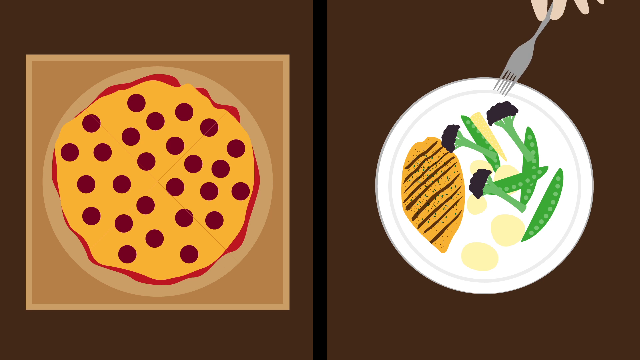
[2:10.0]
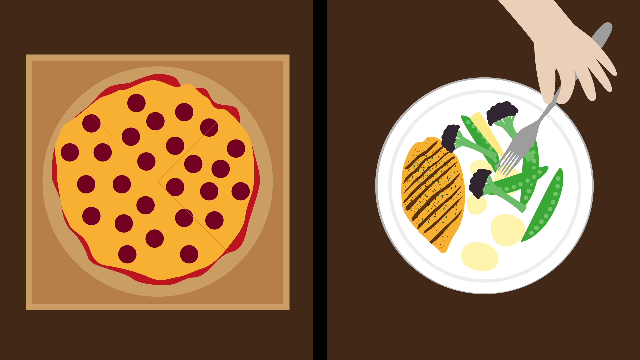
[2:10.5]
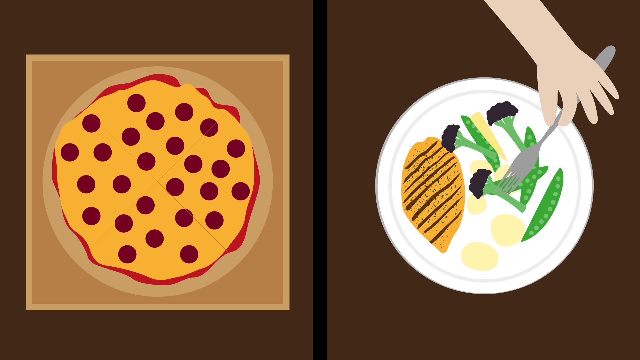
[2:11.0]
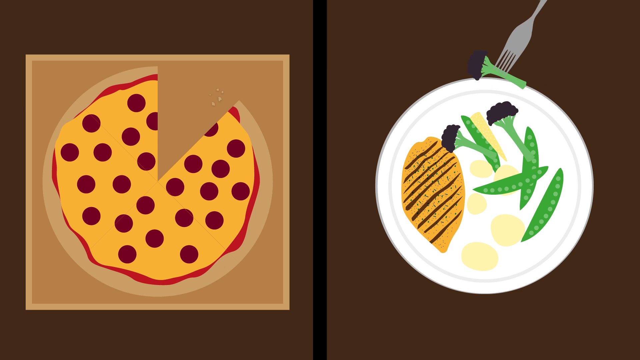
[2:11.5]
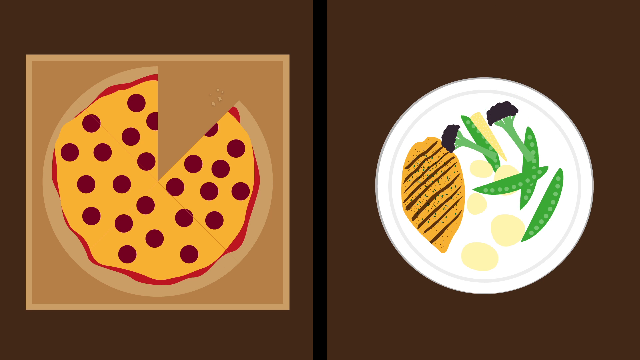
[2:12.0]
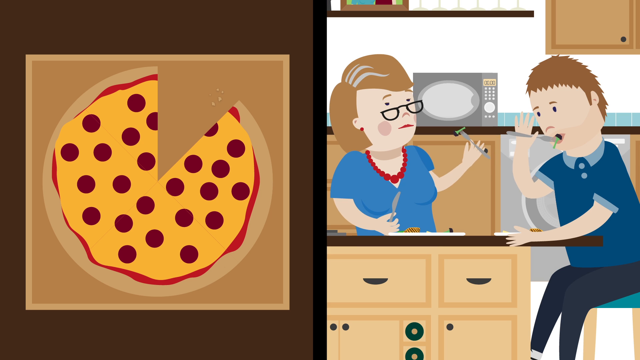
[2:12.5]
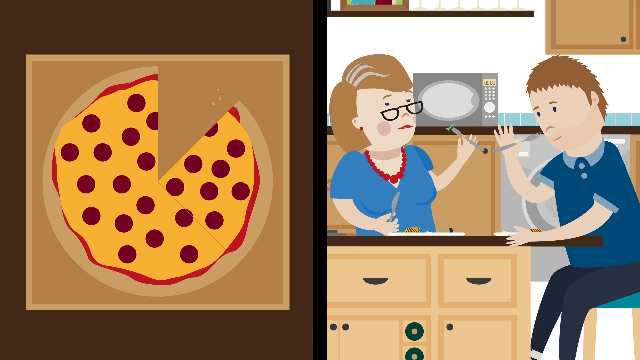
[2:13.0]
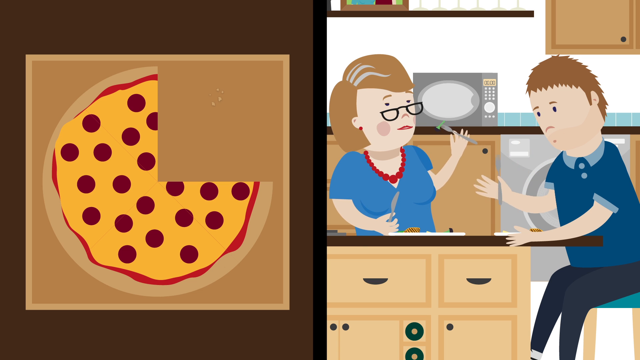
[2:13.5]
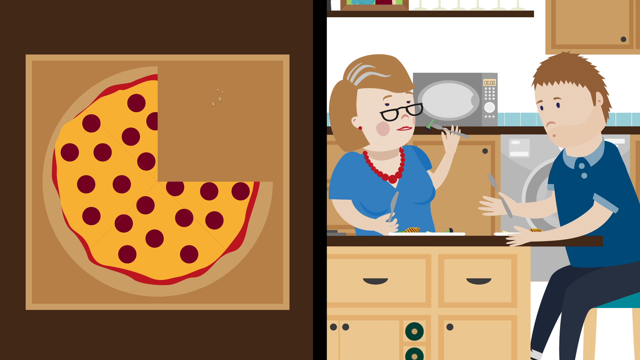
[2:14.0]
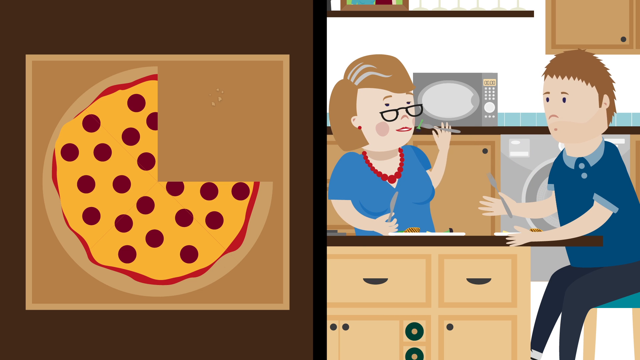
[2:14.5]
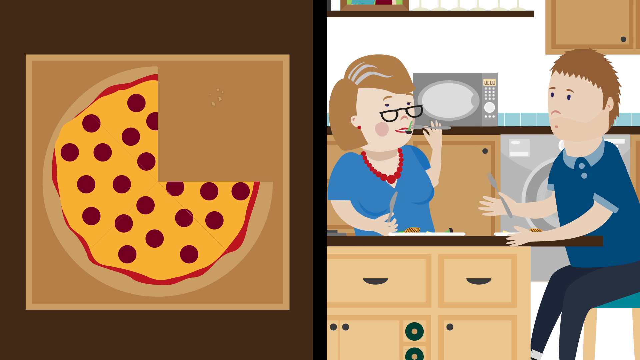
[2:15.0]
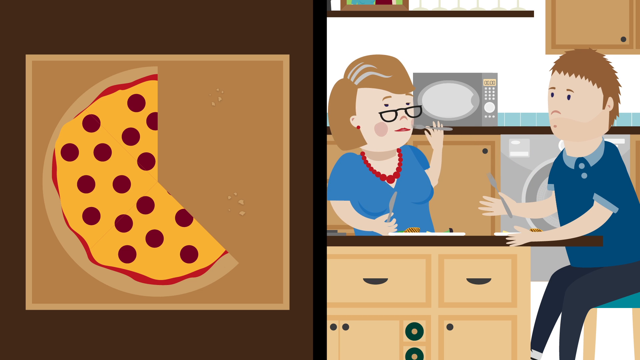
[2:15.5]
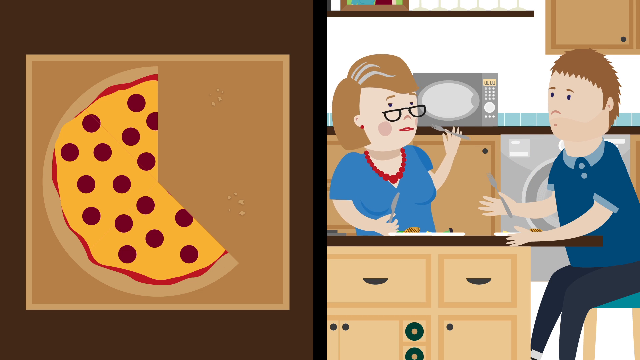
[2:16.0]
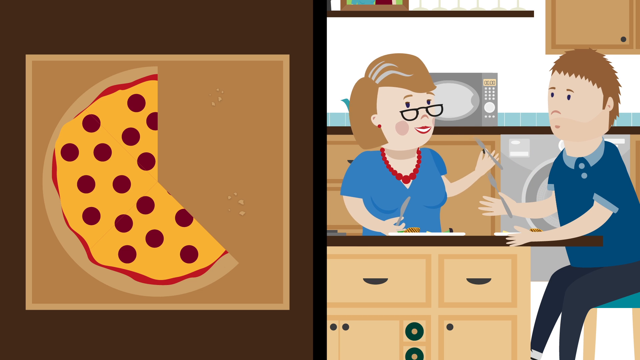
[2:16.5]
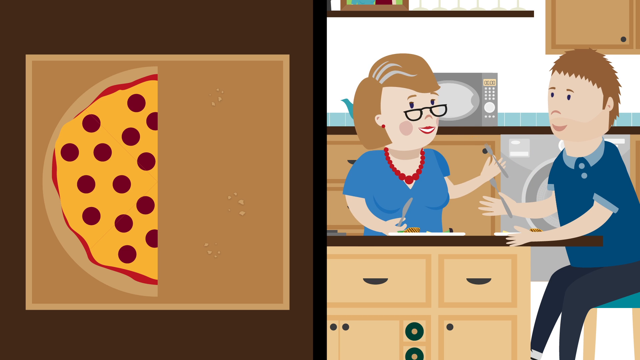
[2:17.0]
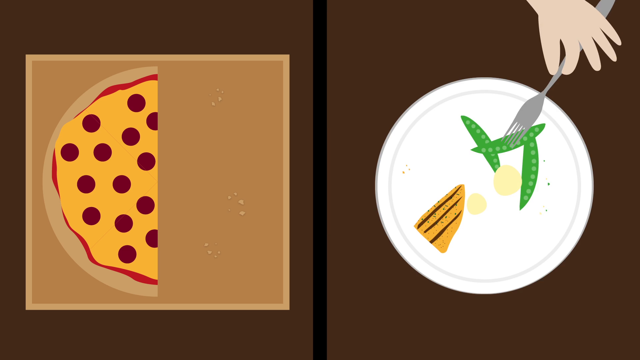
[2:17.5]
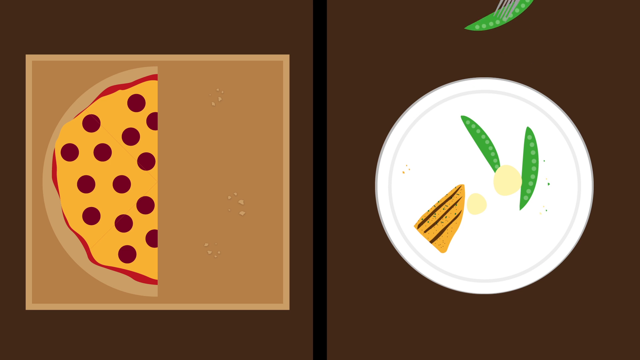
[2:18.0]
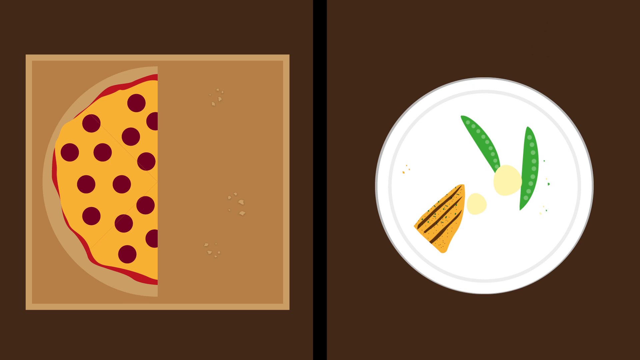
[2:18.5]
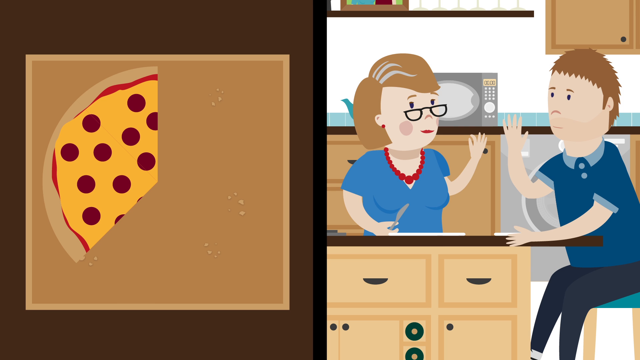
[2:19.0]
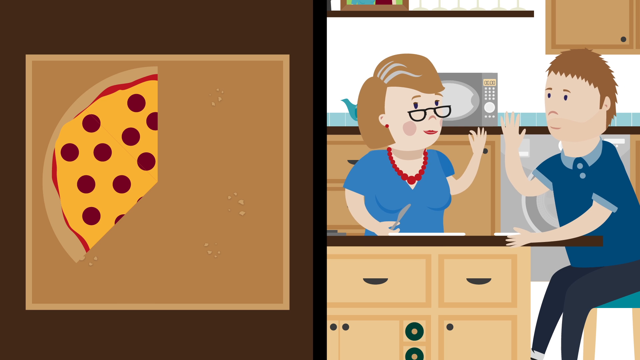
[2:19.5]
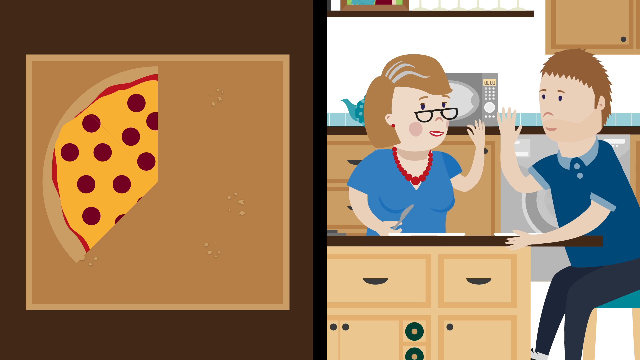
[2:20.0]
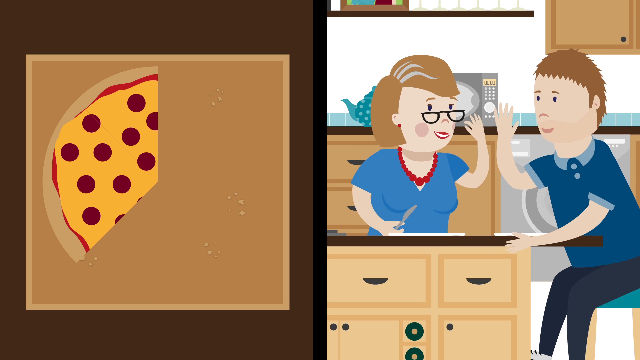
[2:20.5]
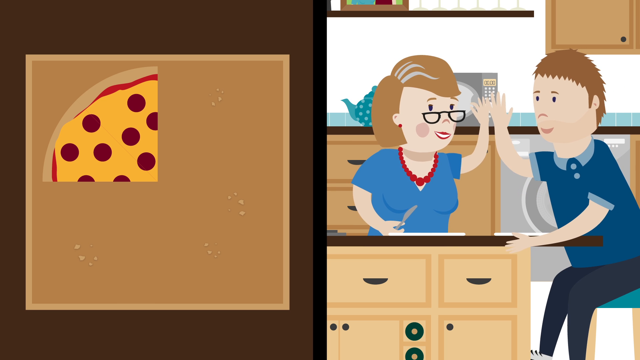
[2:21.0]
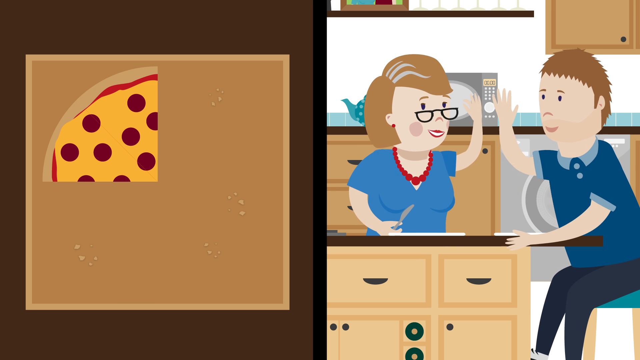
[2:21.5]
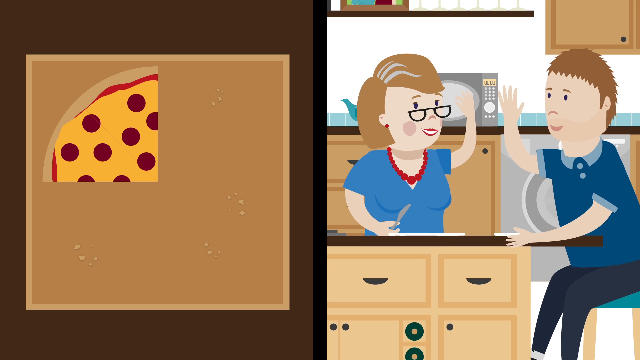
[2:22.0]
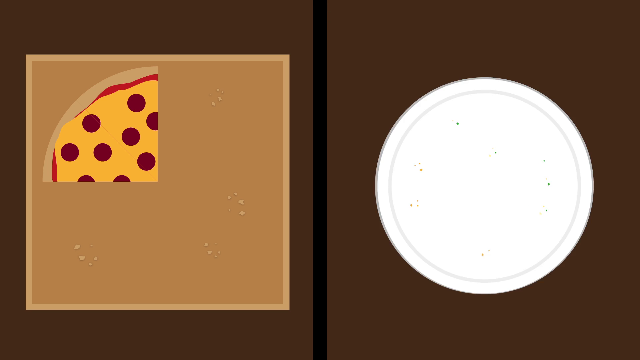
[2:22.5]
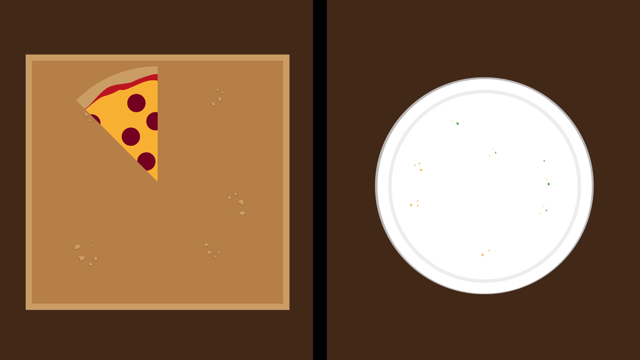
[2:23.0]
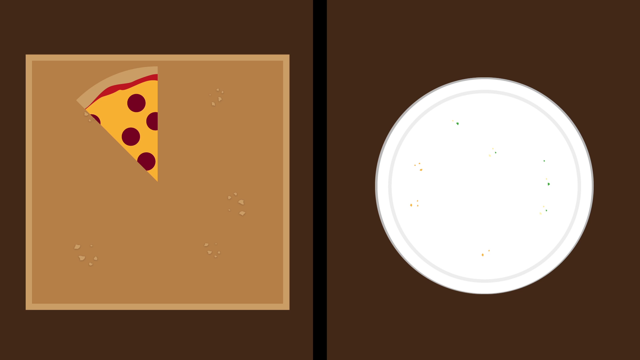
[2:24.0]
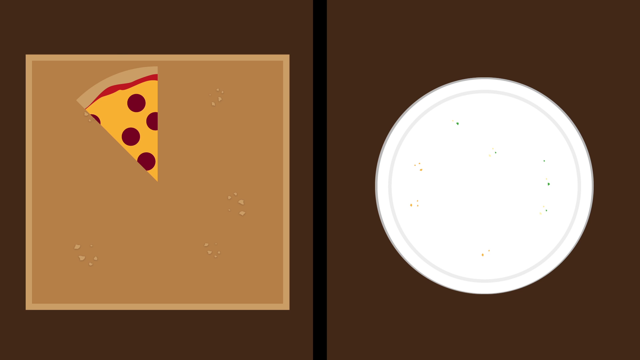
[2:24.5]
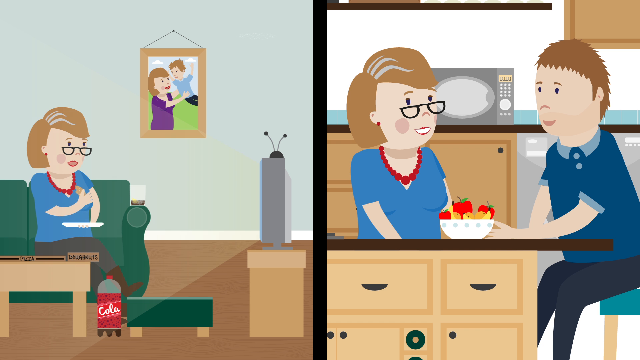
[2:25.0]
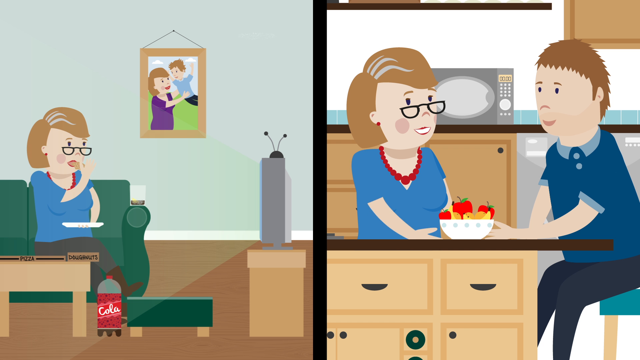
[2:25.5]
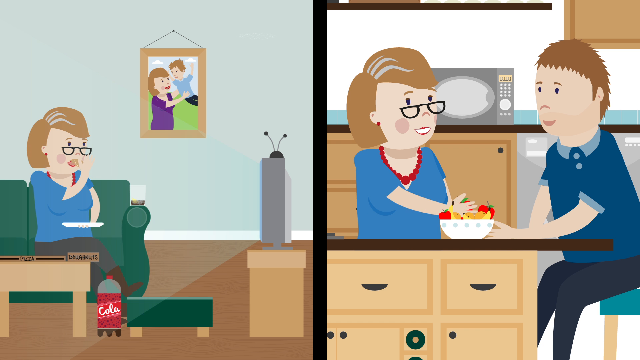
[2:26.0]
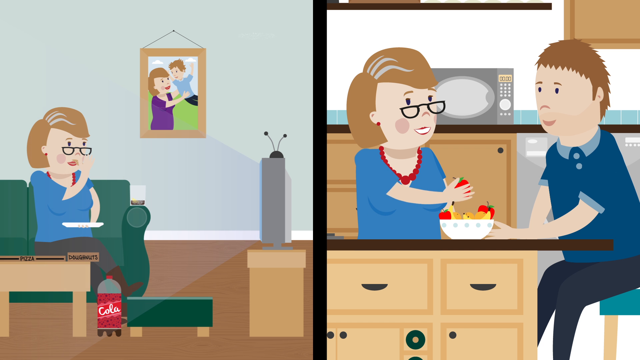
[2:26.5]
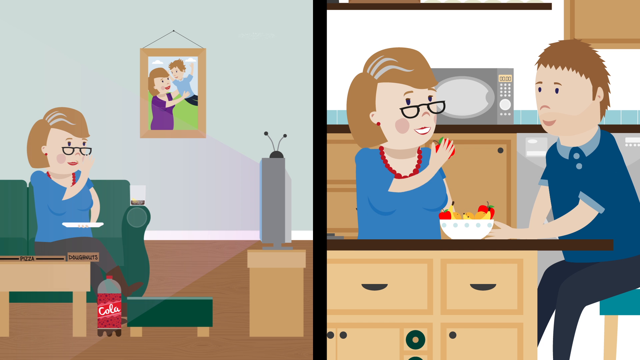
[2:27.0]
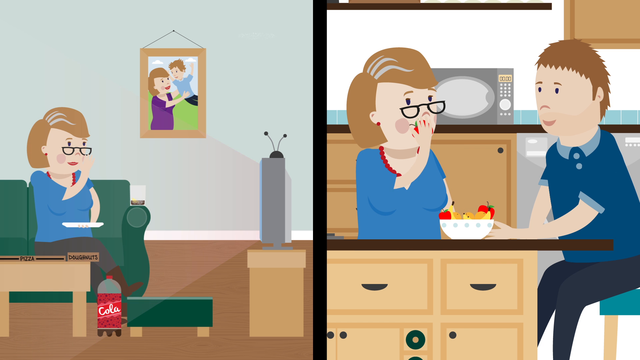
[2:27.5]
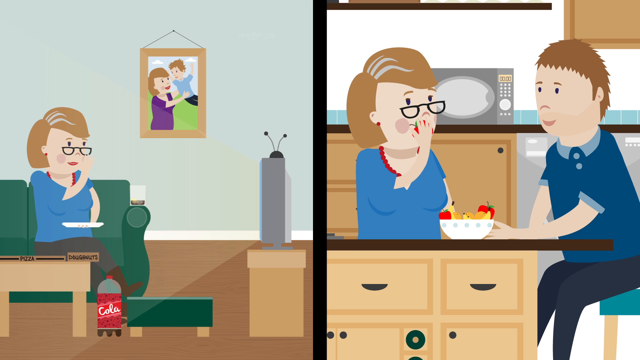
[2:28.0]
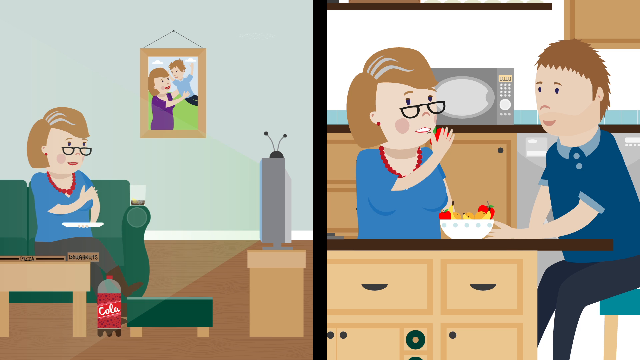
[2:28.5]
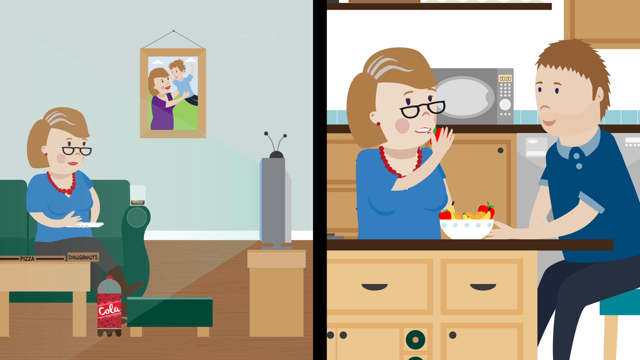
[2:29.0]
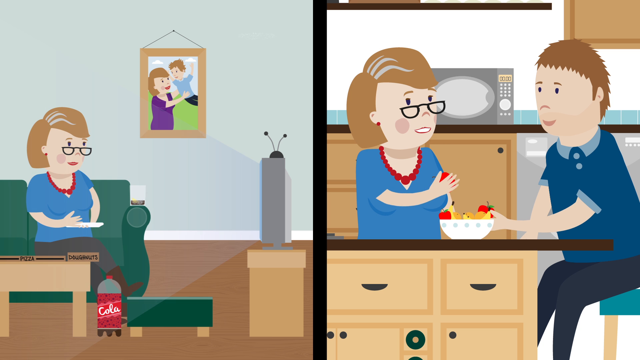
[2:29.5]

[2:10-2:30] On the left side, in a tan square, is what appears to be either pizza or pie. The right side shows what could be steak or some type of meat and what looks like possibly broccoli on a white plate. The whole background is brown with a black line through the center of the screen. A person using a gray fork grabs one of the pieces of broccoli. The lady and the boy are then shown sitting down and eating; the boy gets ready to eat and then eats, and the lady eats her food. She wears a blue dress, red pearls and sunglasses, has brown hair and sits at the other end of the island table, with the microwave, white walls, blue tile, brown cabinet doors and tan island doors behind. A plate is shown almost empty: half of the pizza or pie on the left side is eaten, and the majority of what could have been broccoli or fruits and vegetables and a little of the meat is gone, with only four or five pieces of food left on the plate. A close-up shows probably the son, in a blue shirt and black or dark blue pants, and the lady wears a light blue dress and red pearls. On the left side, the plate is empty, against a brown background with black lines.